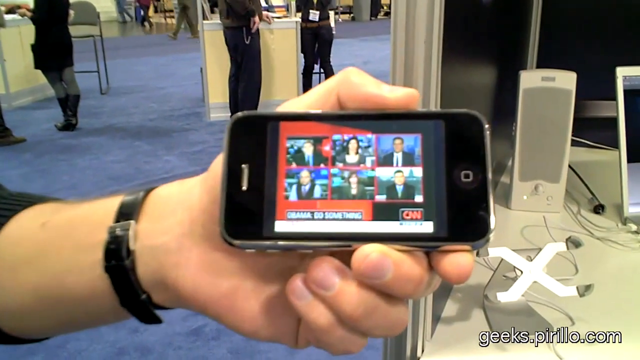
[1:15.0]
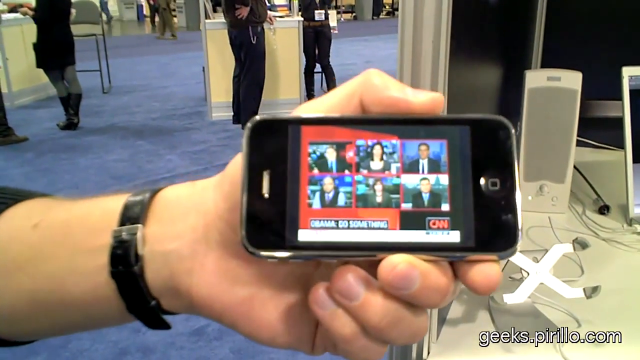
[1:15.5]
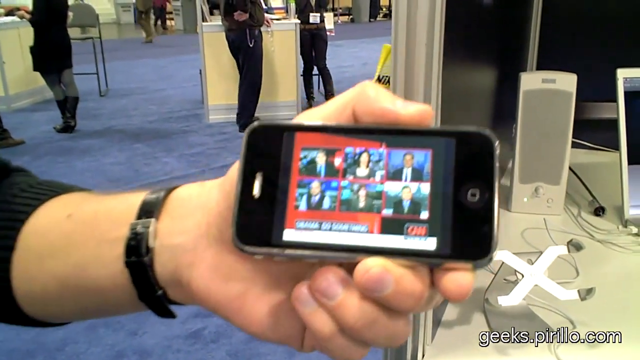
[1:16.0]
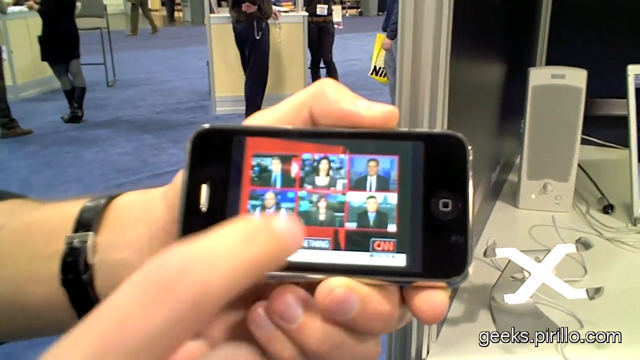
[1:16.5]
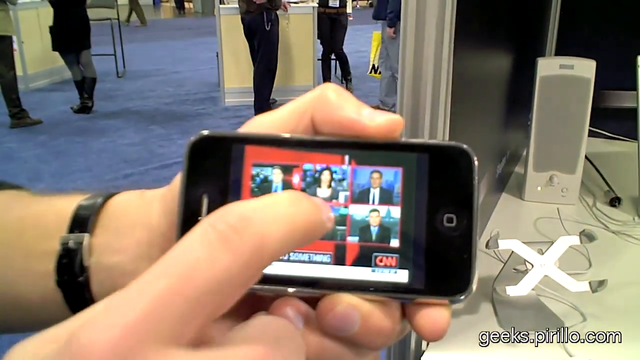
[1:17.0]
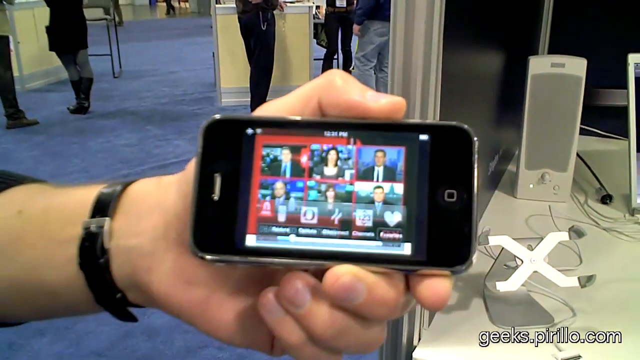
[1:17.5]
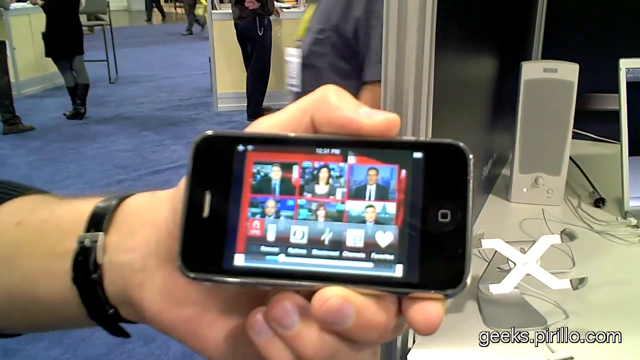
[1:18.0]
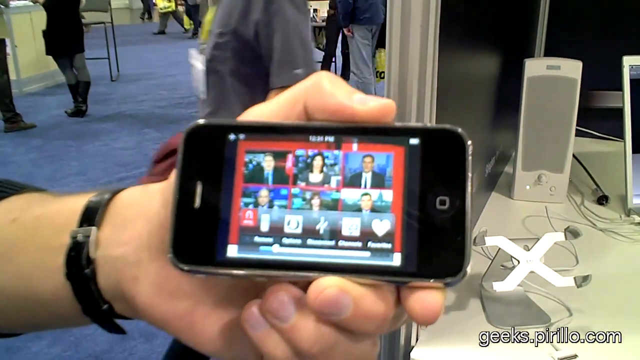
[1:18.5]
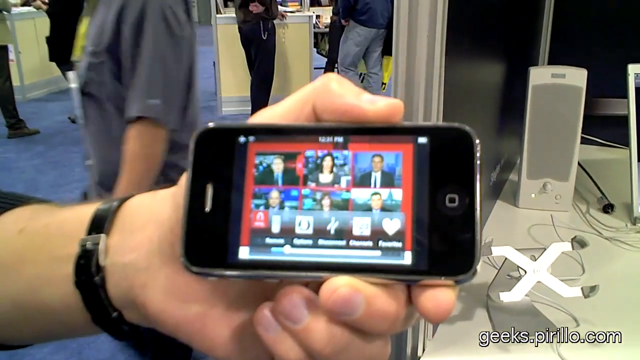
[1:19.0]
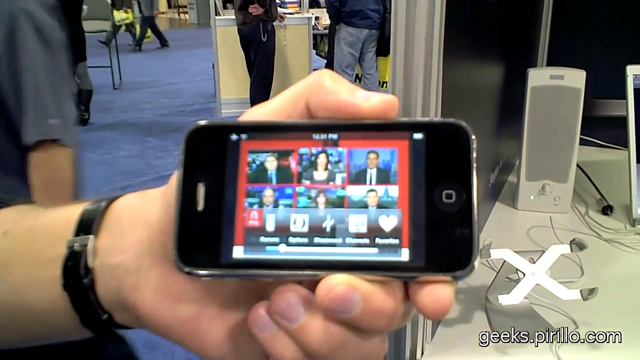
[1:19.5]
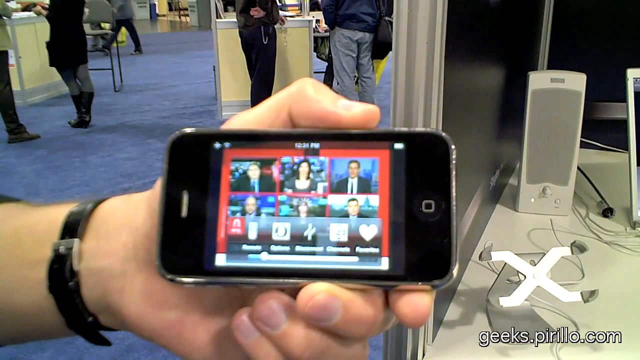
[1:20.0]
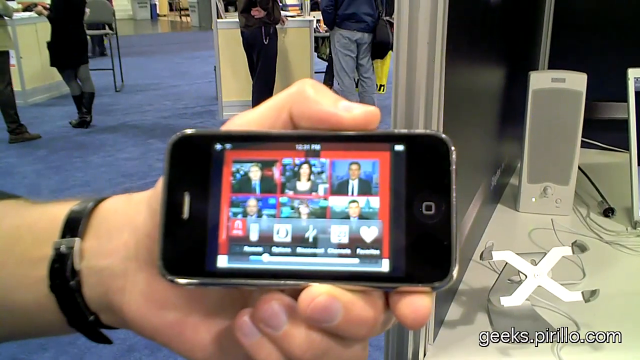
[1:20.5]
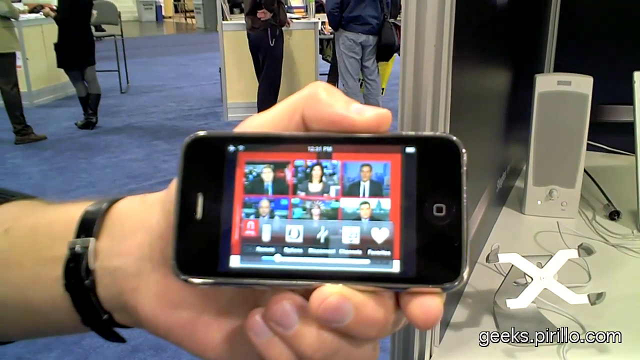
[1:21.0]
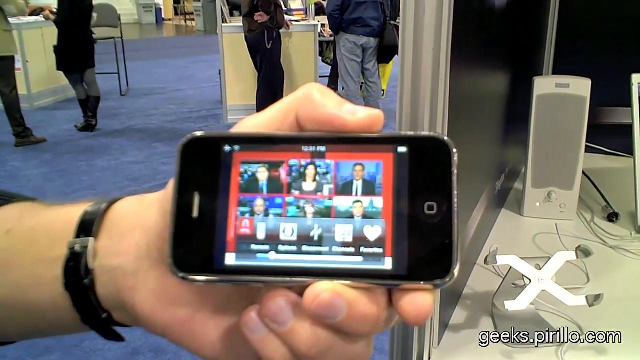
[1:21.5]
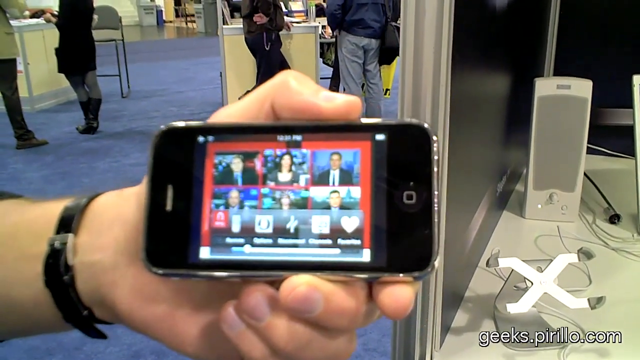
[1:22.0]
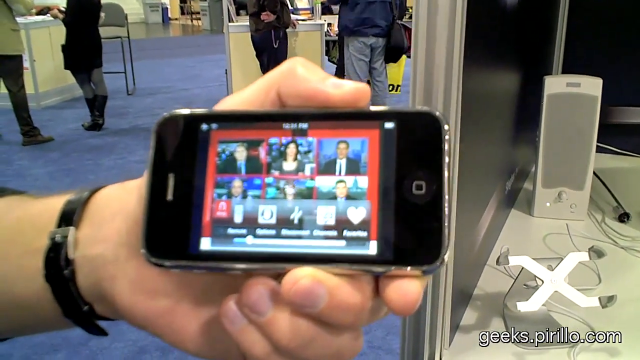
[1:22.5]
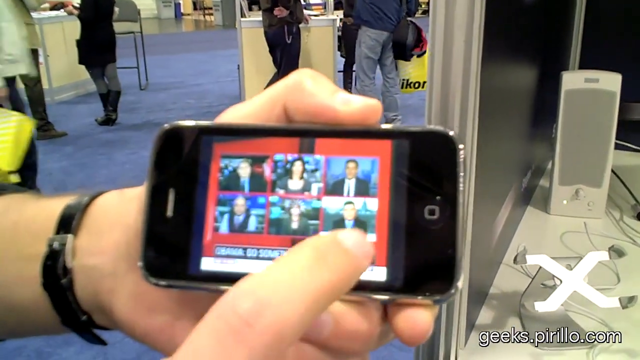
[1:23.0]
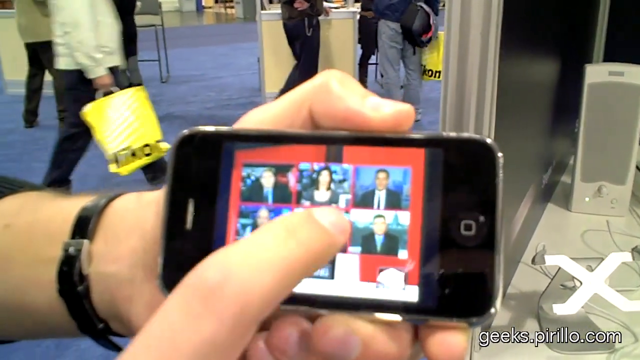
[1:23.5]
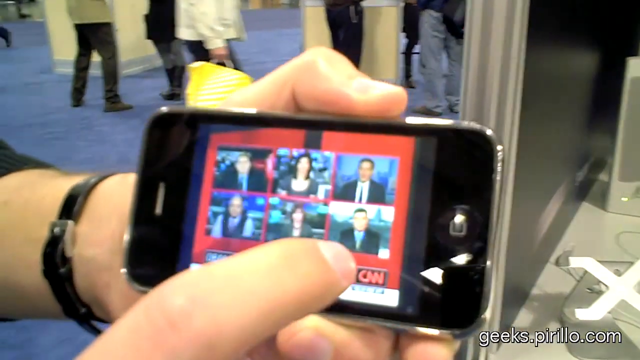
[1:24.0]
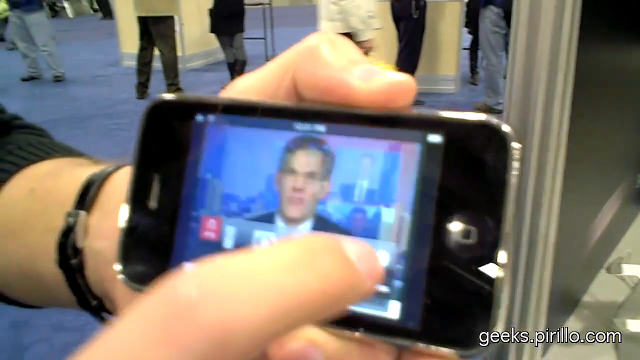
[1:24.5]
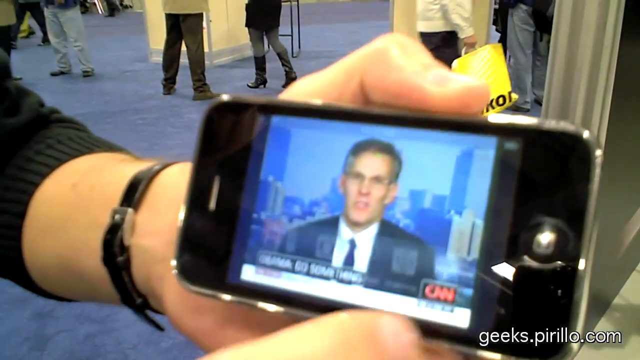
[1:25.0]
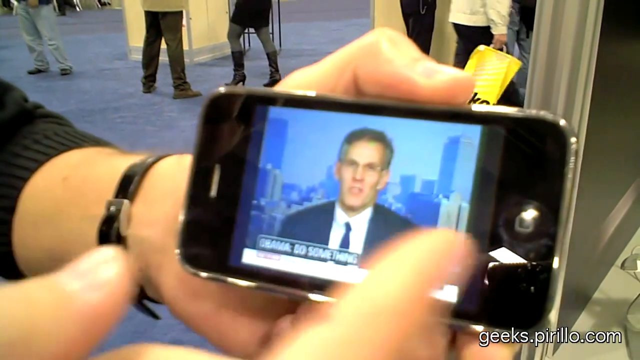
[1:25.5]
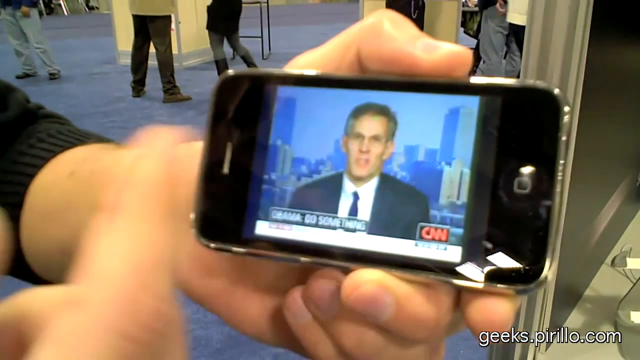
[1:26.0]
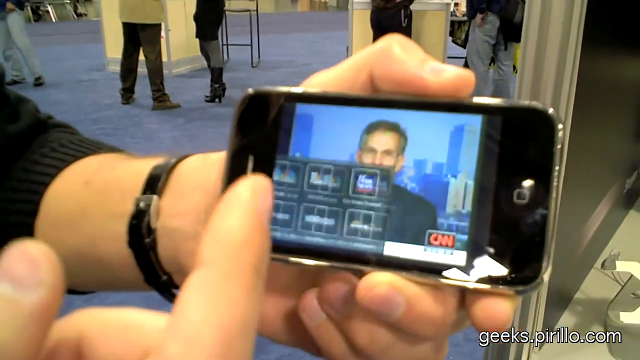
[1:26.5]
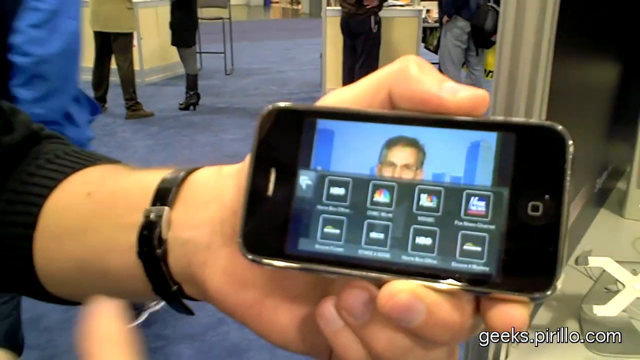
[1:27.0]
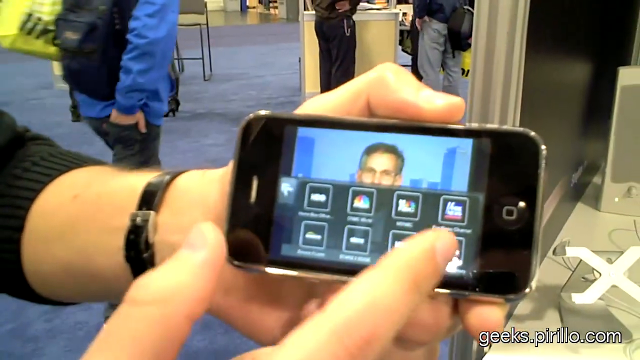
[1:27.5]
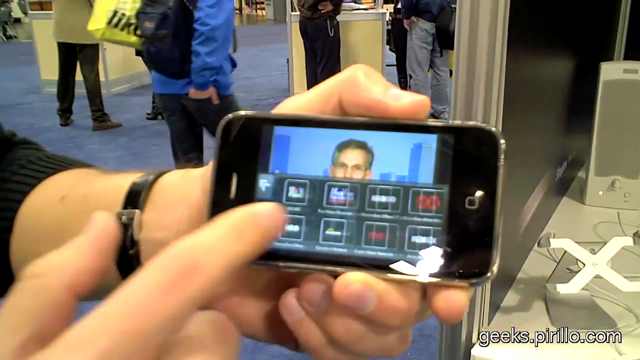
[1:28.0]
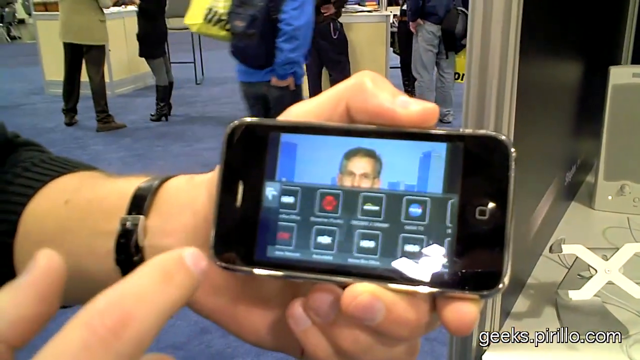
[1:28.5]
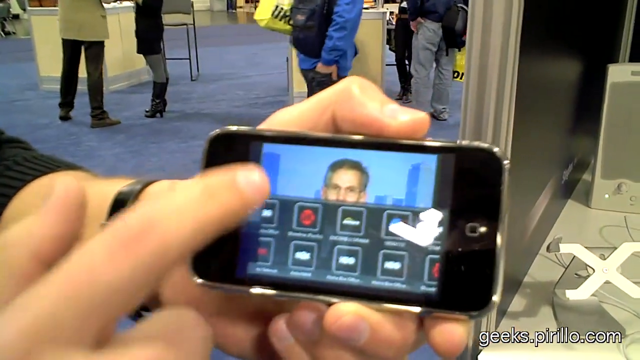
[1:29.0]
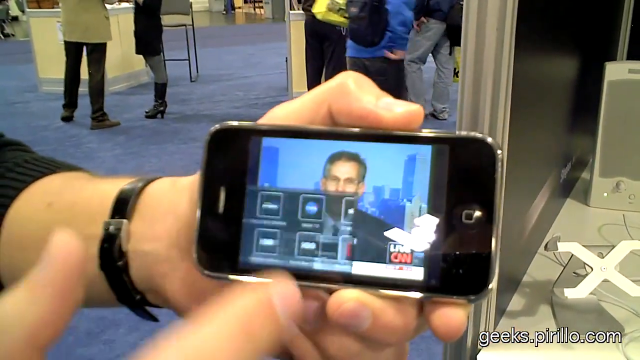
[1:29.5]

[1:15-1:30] The horizontally held iPhone shows CNN with a split screen of six people conversing. The man taps the screen and a submenu appears in a gray bar with five options, each with an icon above it. He goes to tap one of the icons, but it disappears, so he taps the screen again, the icons return, and he taps the heart. It then looks like he kind of slides his index finger in front of the screen, and a menu shoots up from the left-hand side of the screen showing a variety of station logos. He toggles through the station logos once, then closes the menu completely with another swipe.